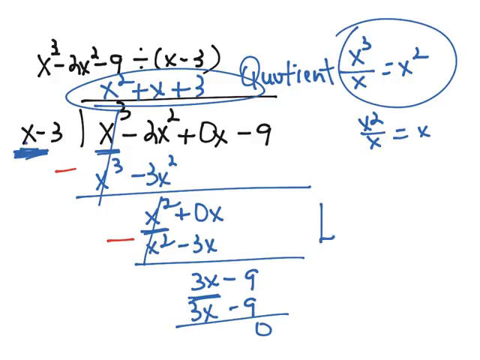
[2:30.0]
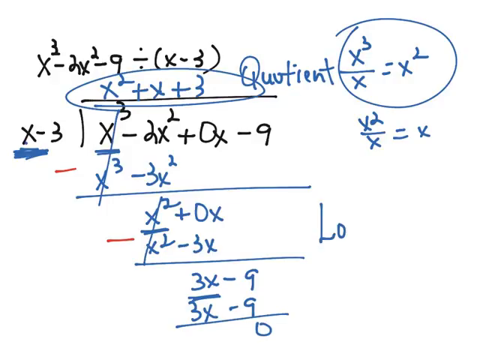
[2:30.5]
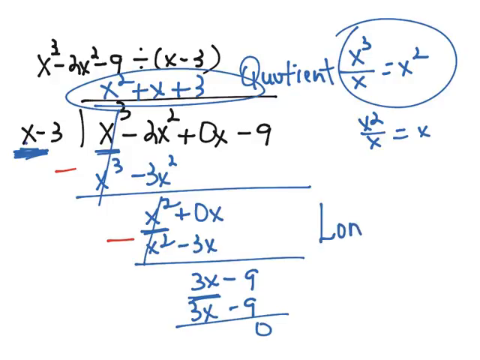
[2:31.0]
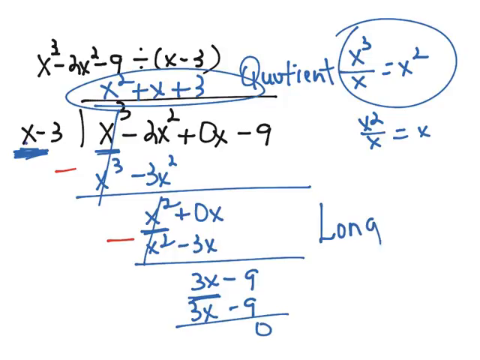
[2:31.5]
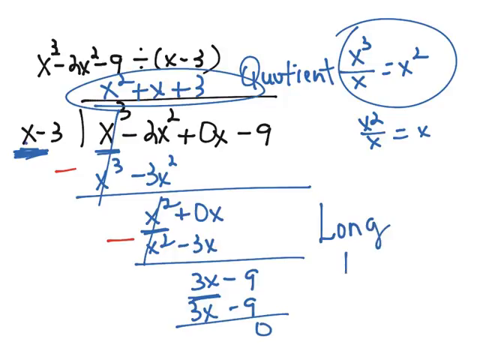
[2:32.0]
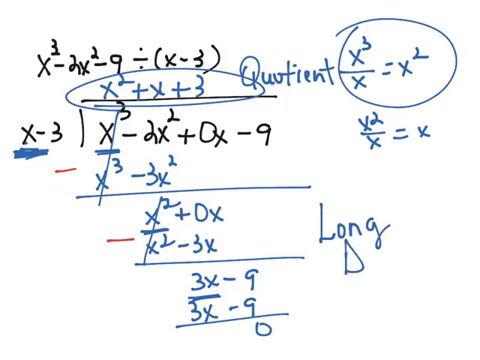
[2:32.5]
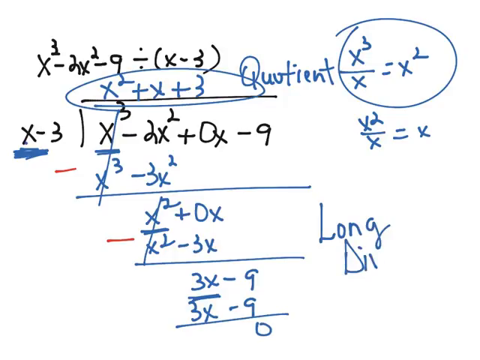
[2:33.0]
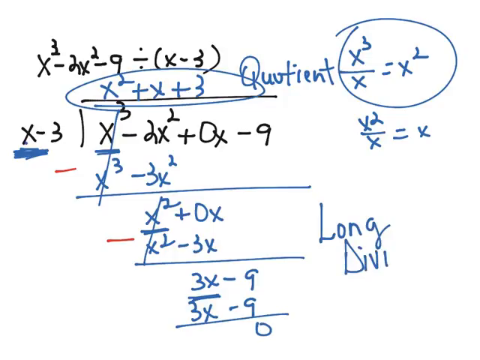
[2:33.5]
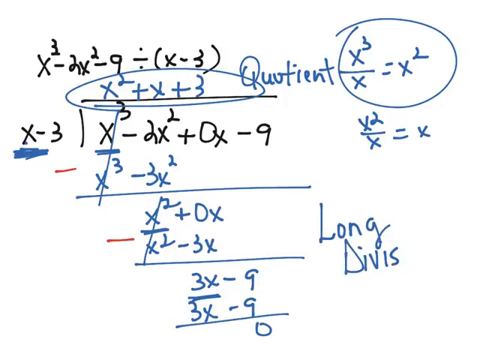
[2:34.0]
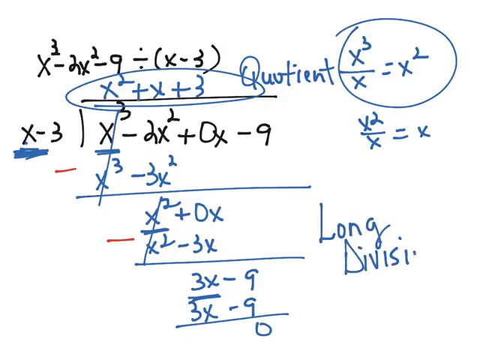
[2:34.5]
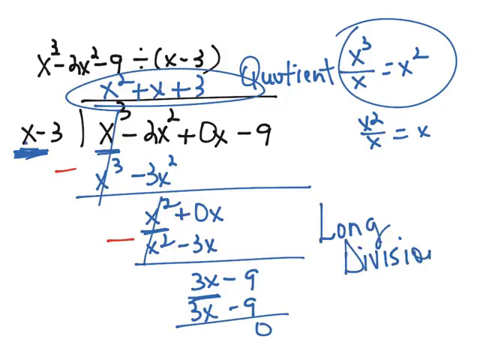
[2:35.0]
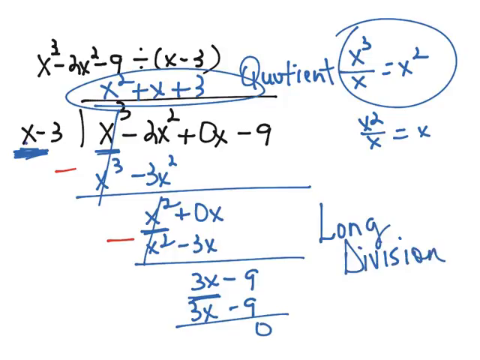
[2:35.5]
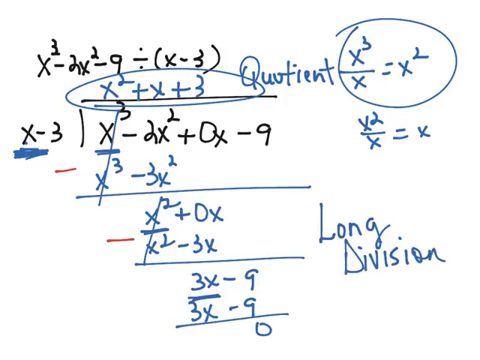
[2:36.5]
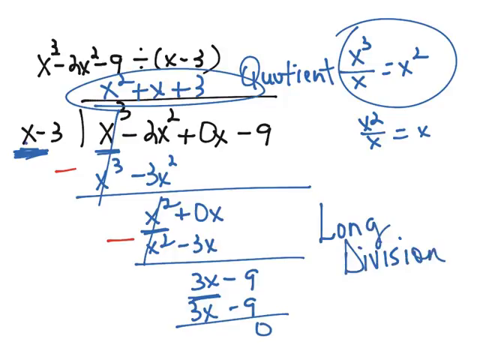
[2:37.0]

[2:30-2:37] The math equation x³ − 2x² − 9 divided by (x − 3) is written in black, and it has been rewritten as x³ − 2x² + 0x − 9 divided by x − 3, also in black. The answer, x² + x + 3, is written in blue over the original equation and circled in blue. To the right of the circled answer is the word "quotient". In the bottom right corner of the screen, the words "long division" are written in blue.